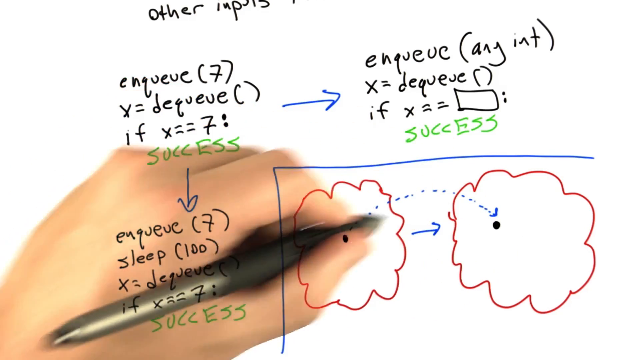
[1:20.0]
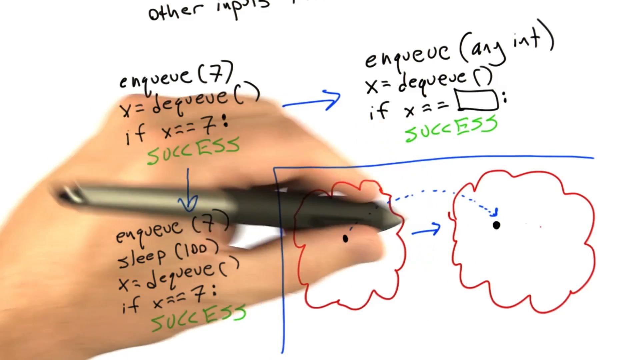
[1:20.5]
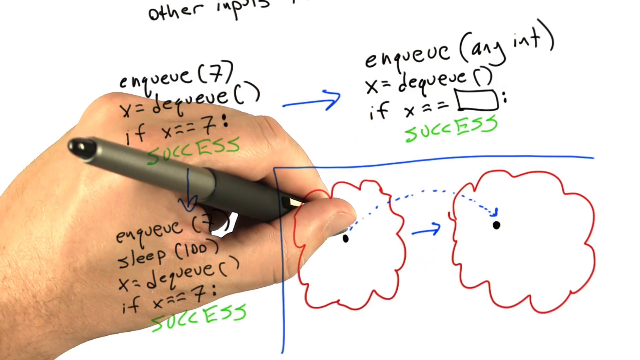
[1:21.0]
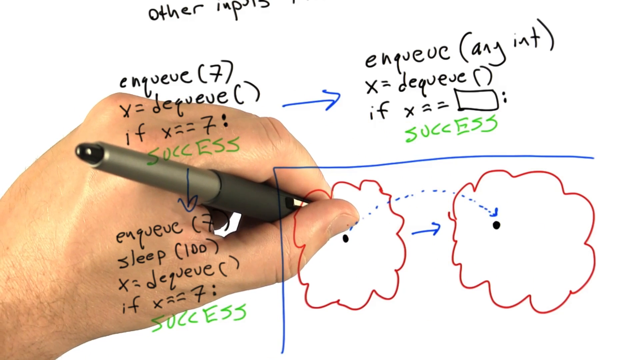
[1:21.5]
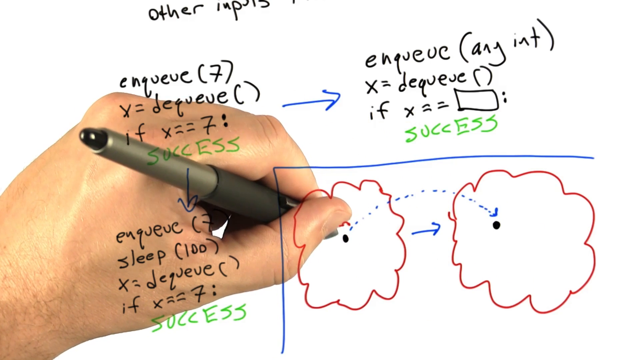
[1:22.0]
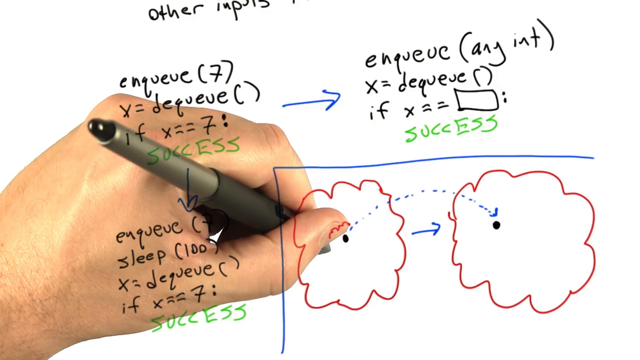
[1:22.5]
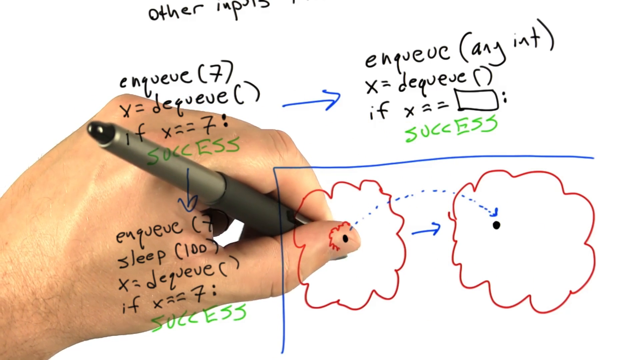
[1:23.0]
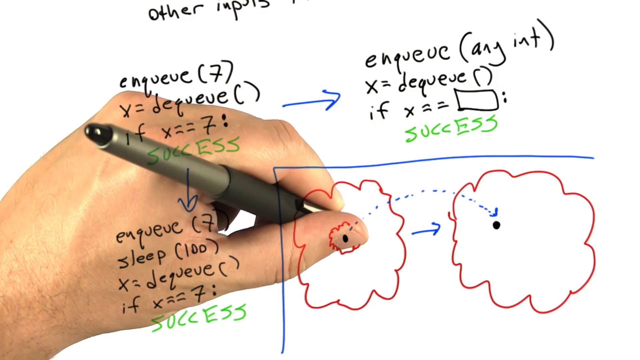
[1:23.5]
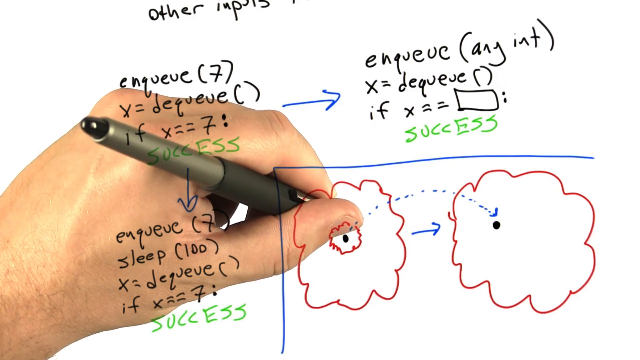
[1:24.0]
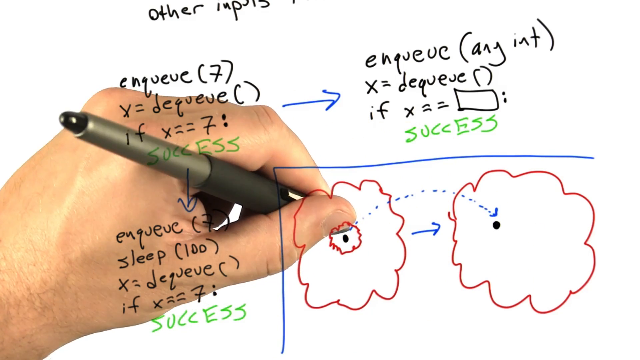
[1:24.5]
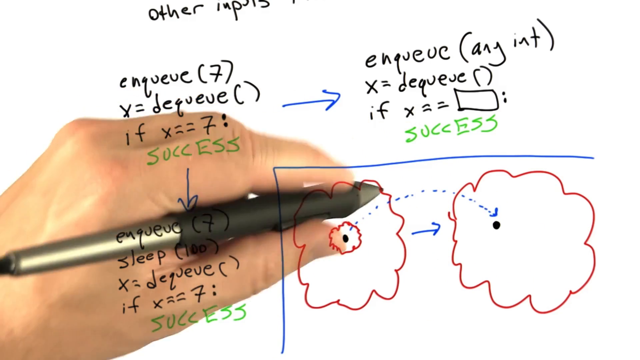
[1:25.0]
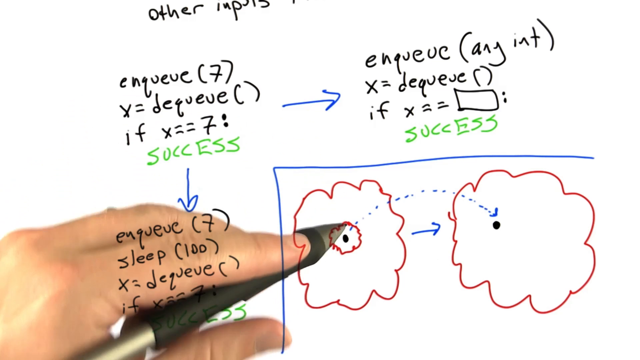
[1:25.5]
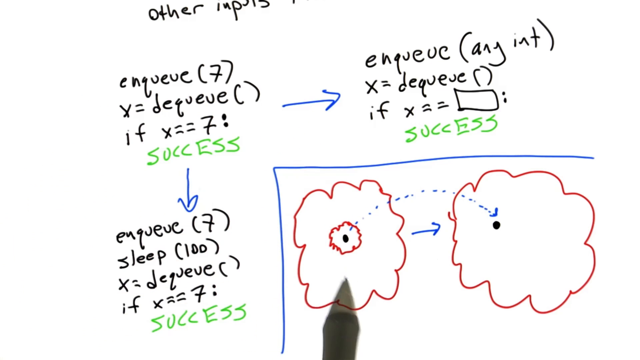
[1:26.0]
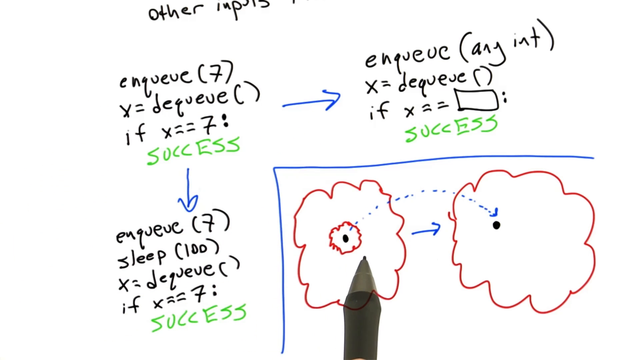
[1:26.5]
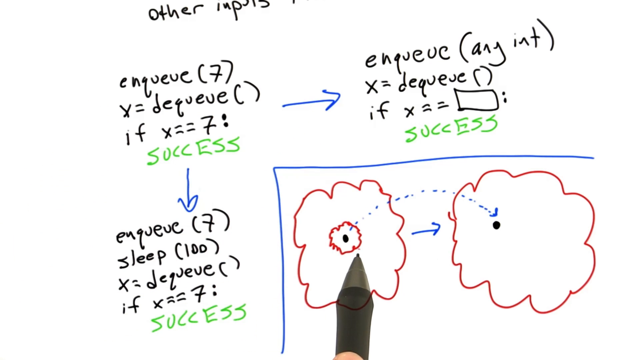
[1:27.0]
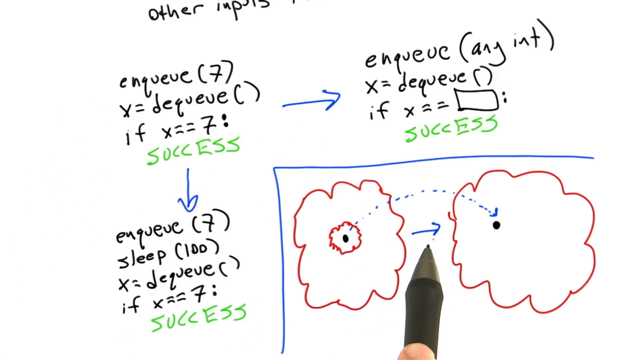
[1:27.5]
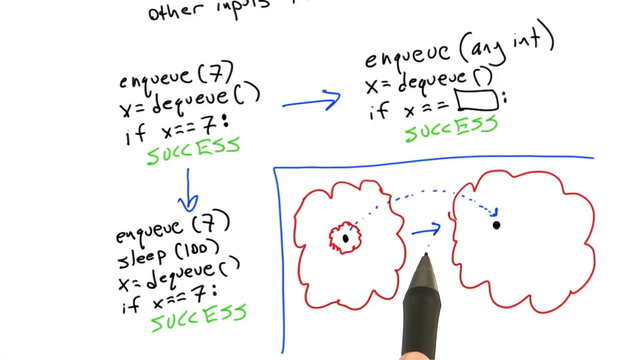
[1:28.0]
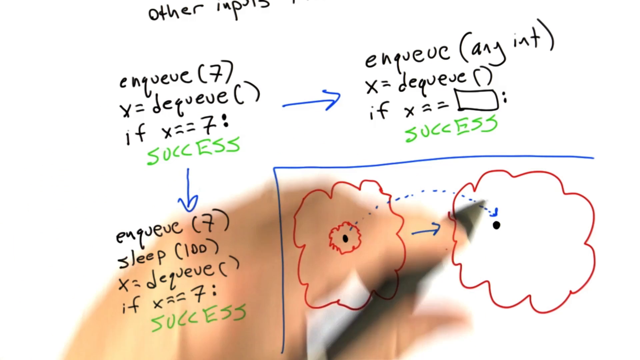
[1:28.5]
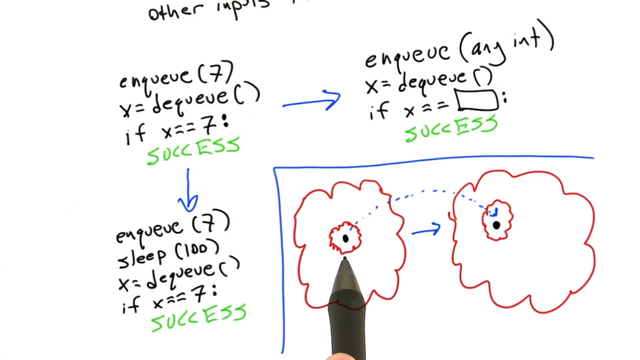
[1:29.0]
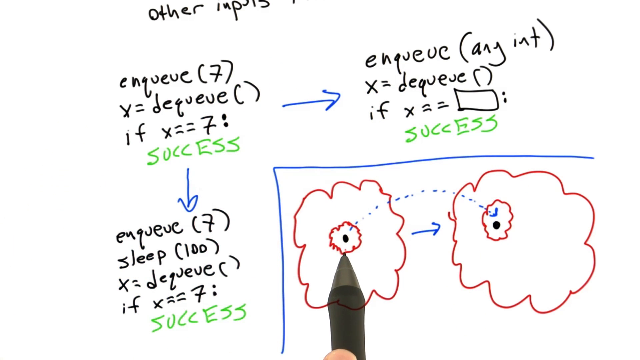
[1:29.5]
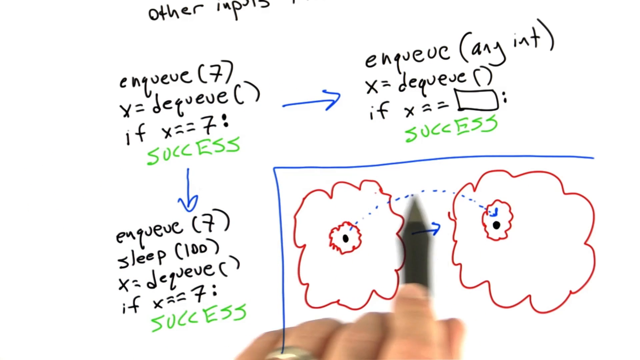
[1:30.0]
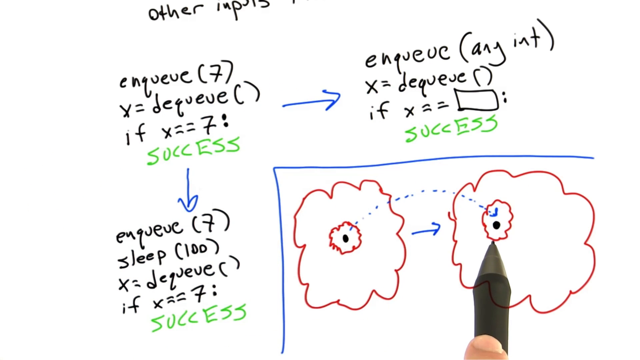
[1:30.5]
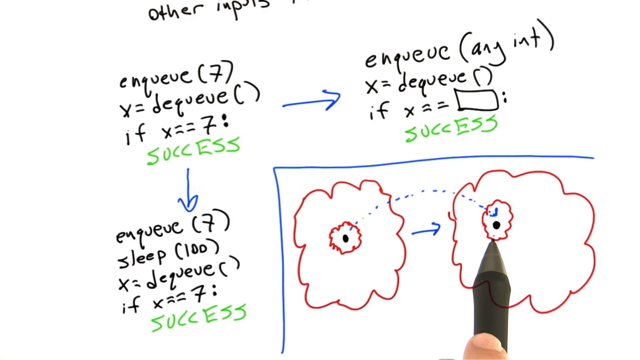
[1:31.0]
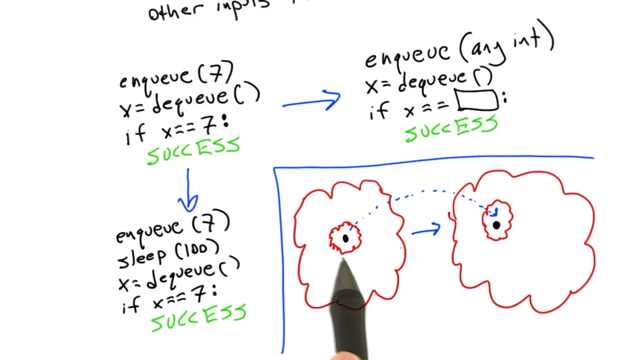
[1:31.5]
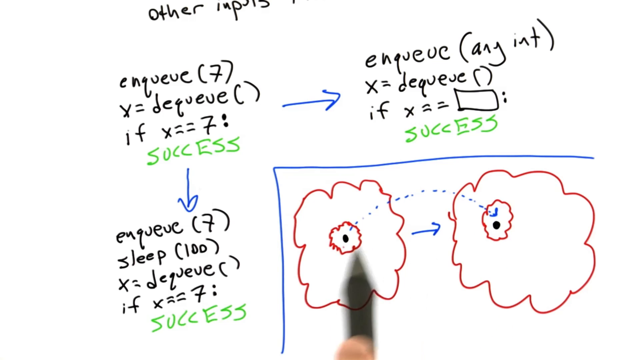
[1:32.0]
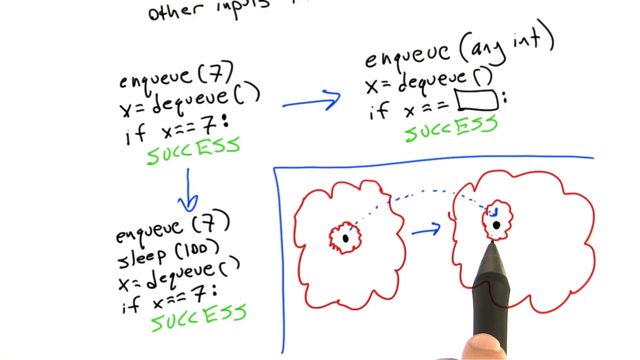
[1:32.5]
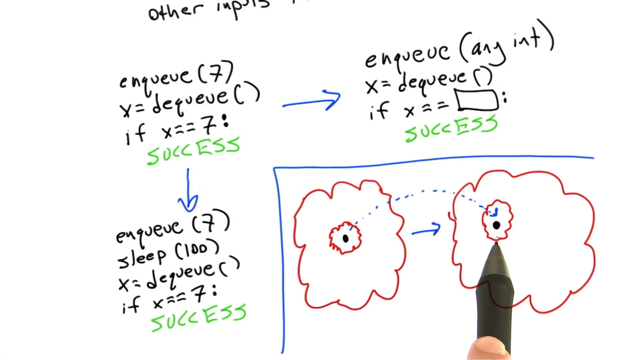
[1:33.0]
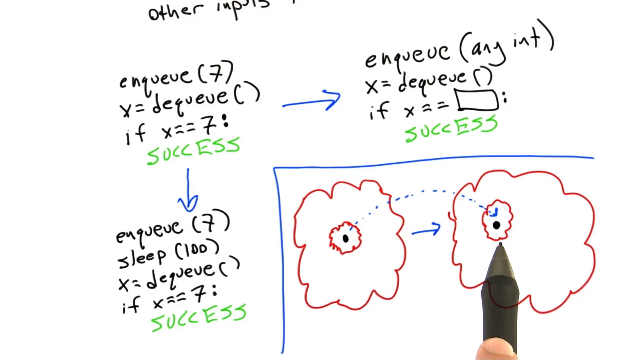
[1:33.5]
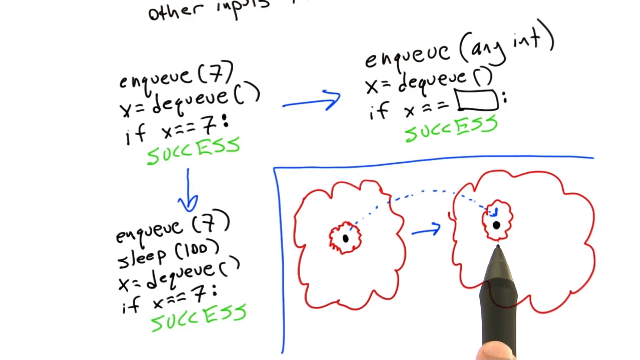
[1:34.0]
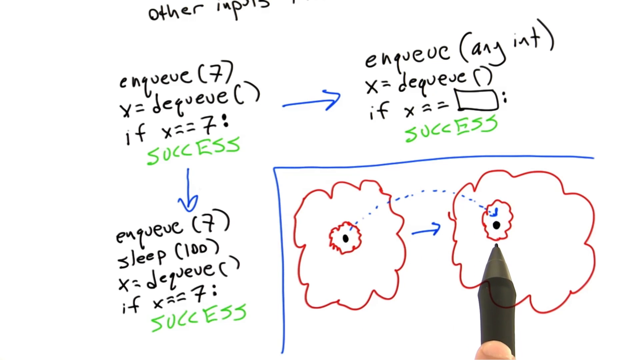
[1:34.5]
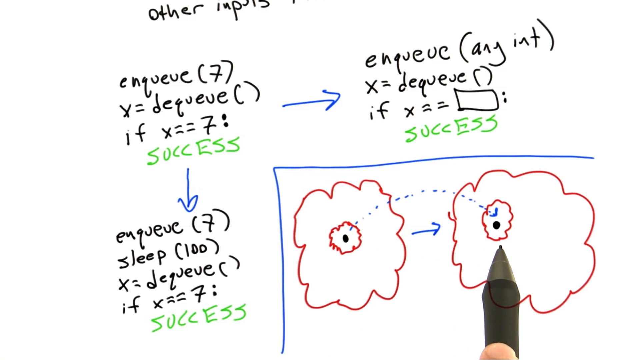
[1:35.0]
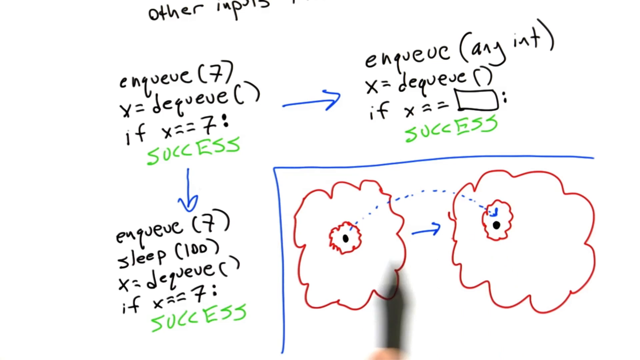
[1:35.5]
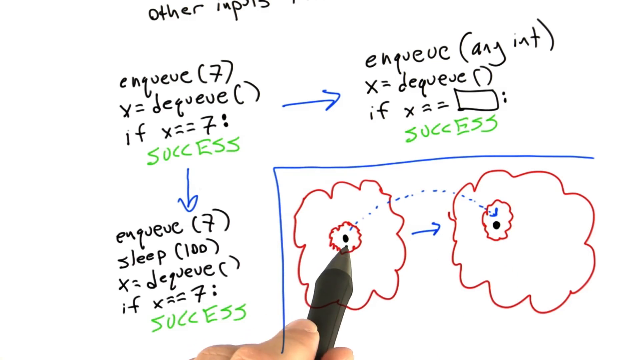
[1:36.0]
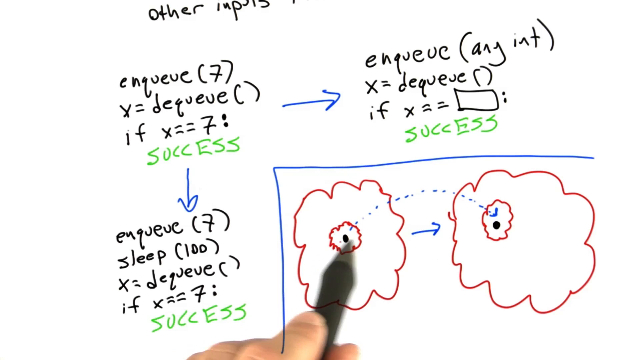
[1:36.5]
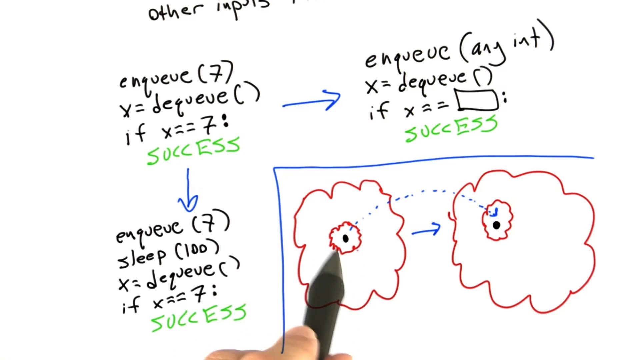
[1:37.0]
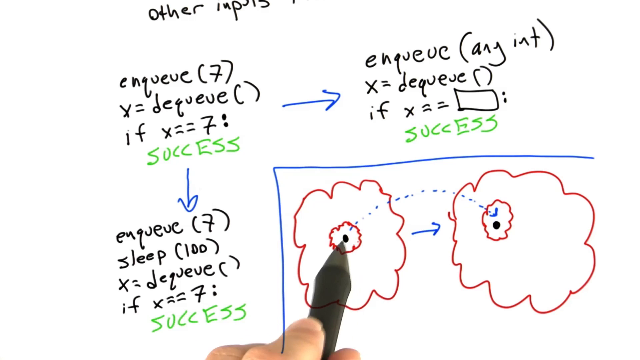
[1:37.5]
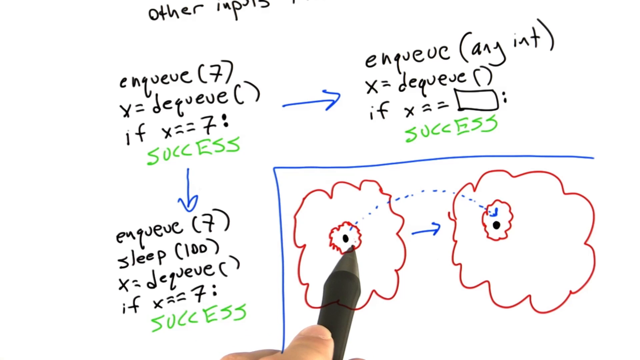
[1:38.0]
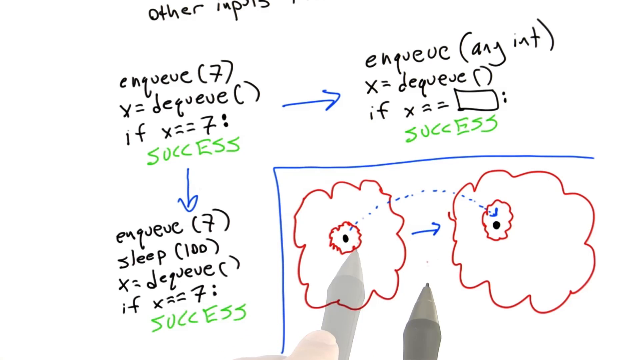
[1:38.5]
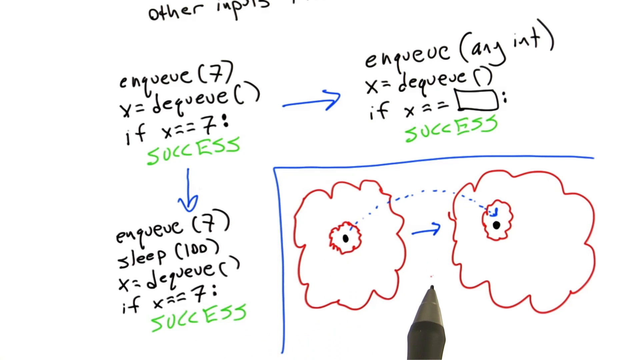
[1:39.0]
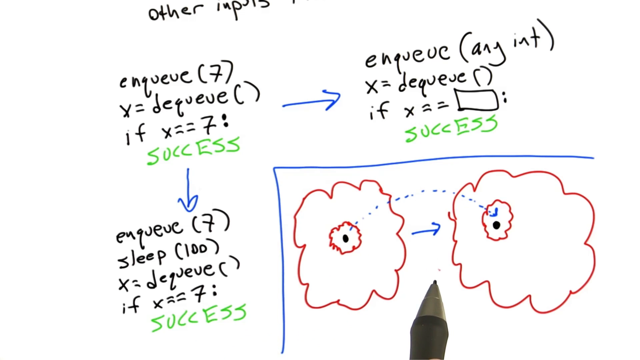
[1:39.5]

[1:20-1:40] The hand moves continuously from one cloud to the other. It hovers above the first cloud, over the first dot, and draws a smaller pink circle around it. Once the circle is finished, the pen points to this dot, then to the arrow in the center, then to the dot in the next cloud. The person draws another pink cloud around the second dot, points to the dot in this cloud, moves back to the other cloud and points at that dot, then jumps back to the second cloud and points at it again. The person moves back to the first dot and hovers over it with the pen as if indicating something. The hand then moves to the bottom of both clouds, sits in between them, and goes up again.